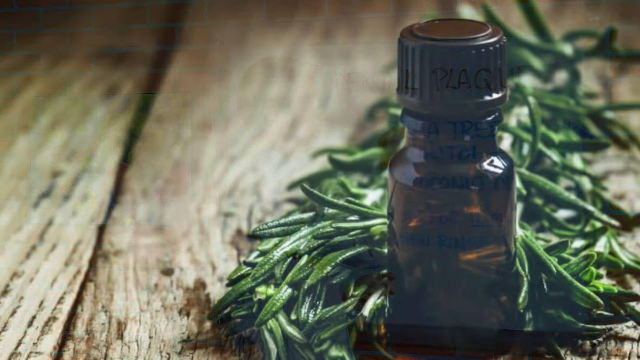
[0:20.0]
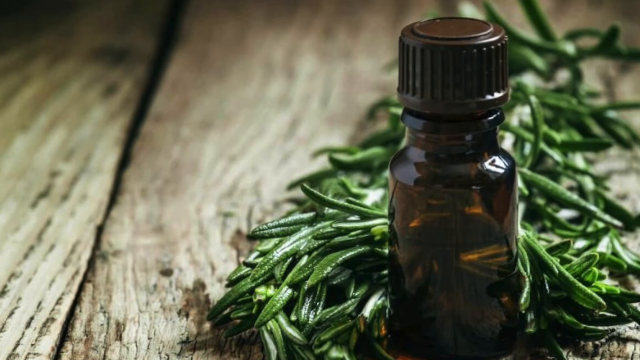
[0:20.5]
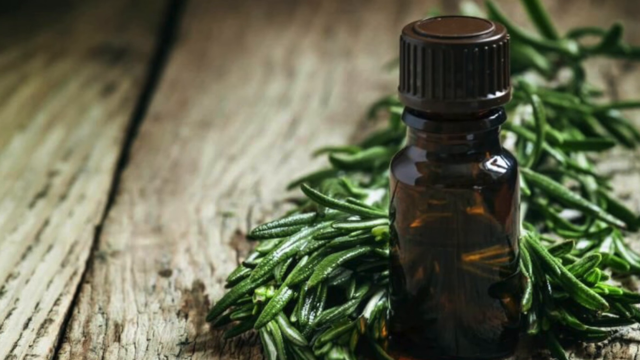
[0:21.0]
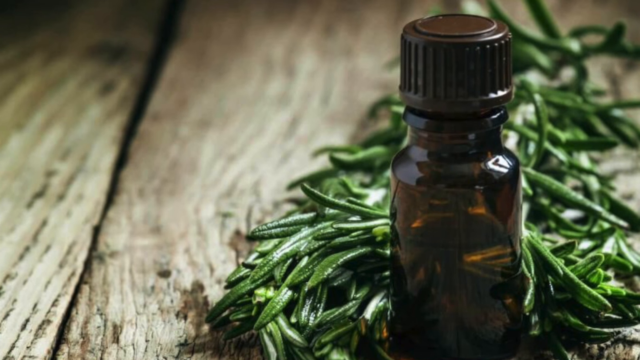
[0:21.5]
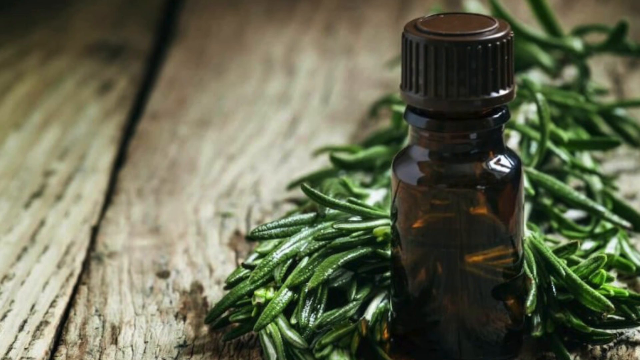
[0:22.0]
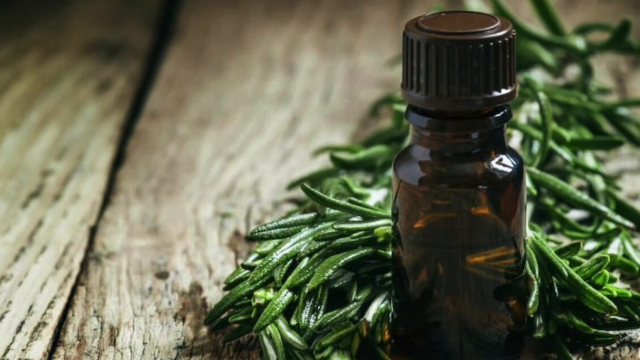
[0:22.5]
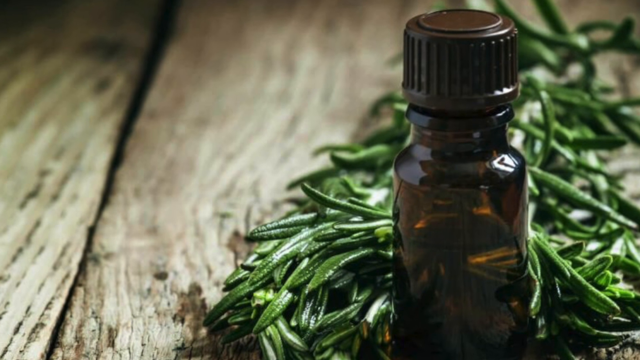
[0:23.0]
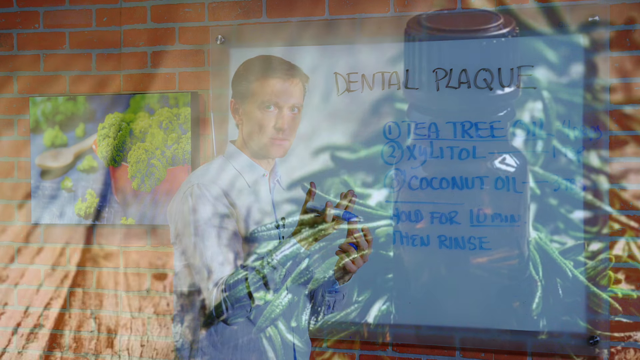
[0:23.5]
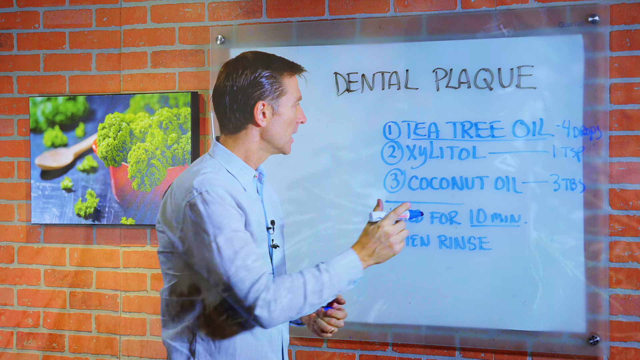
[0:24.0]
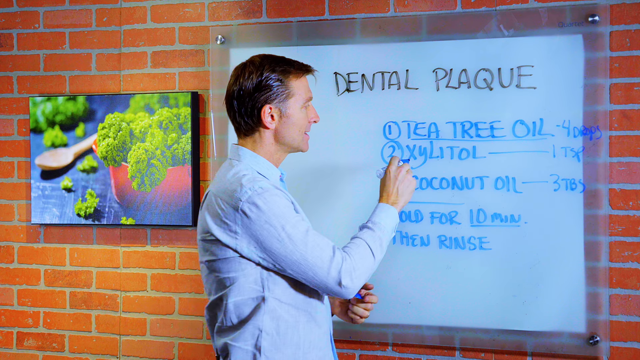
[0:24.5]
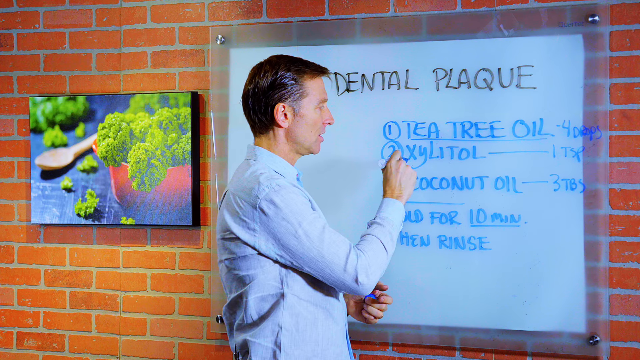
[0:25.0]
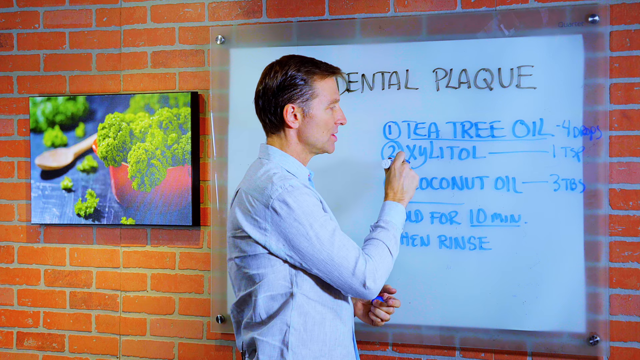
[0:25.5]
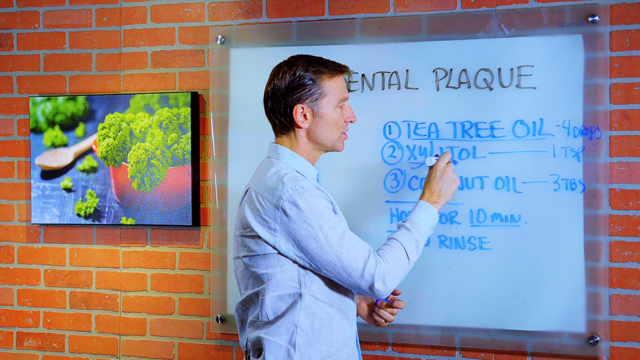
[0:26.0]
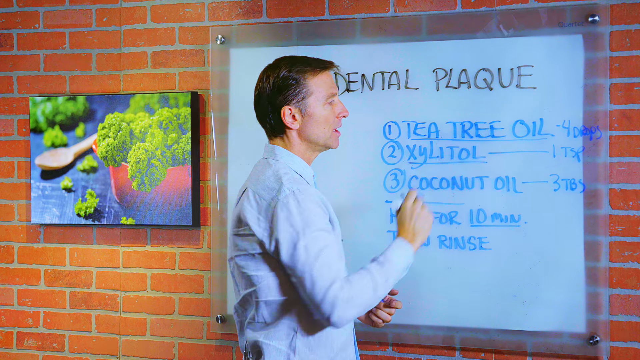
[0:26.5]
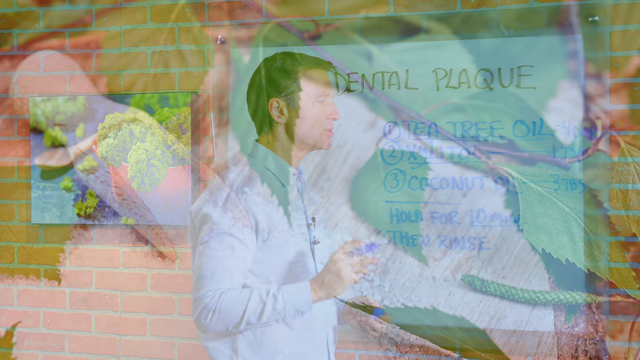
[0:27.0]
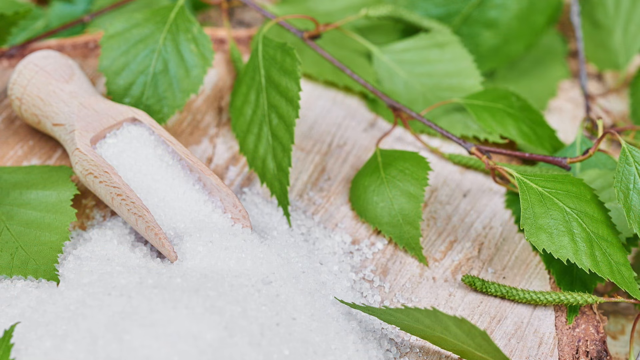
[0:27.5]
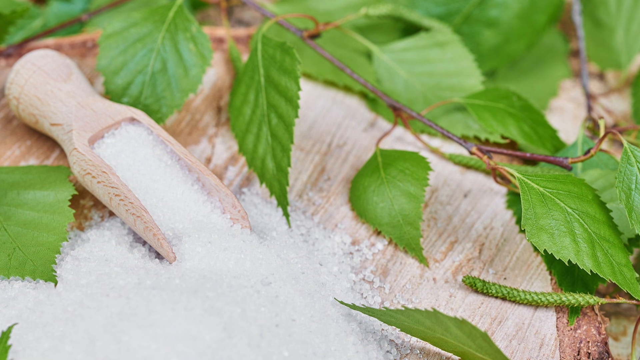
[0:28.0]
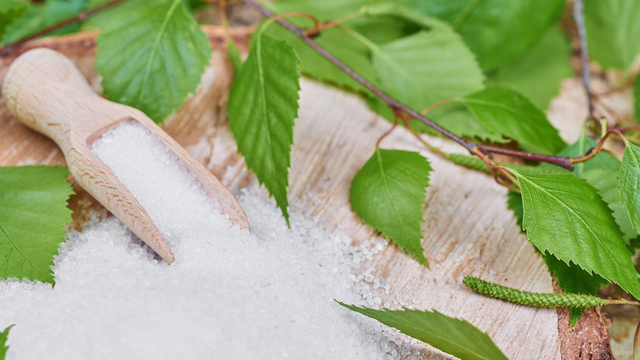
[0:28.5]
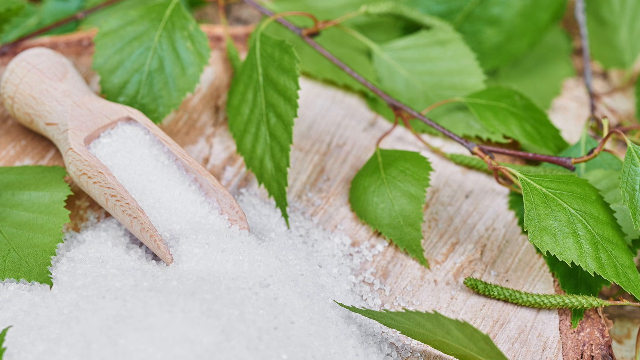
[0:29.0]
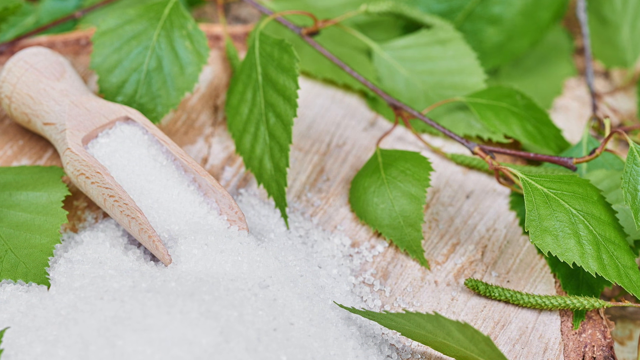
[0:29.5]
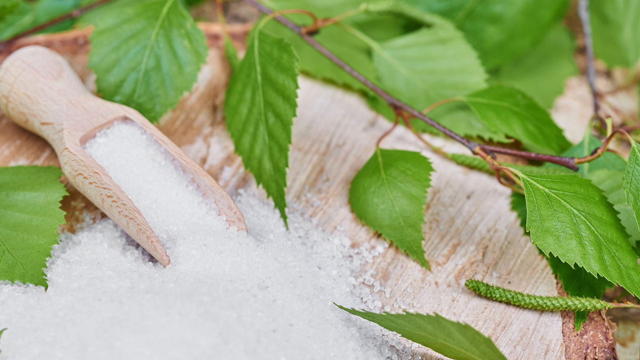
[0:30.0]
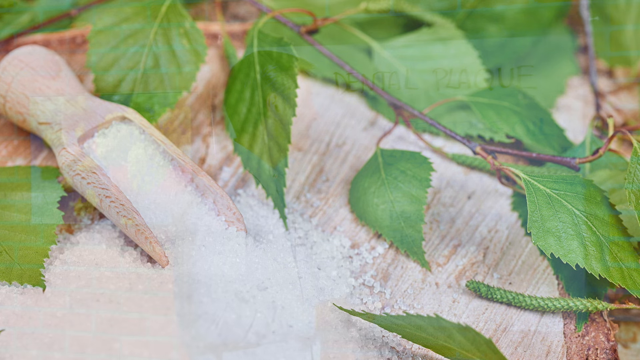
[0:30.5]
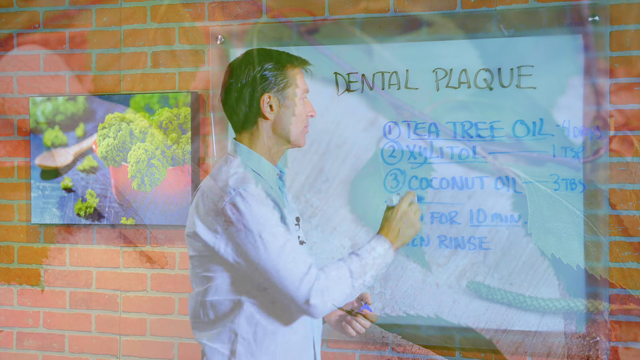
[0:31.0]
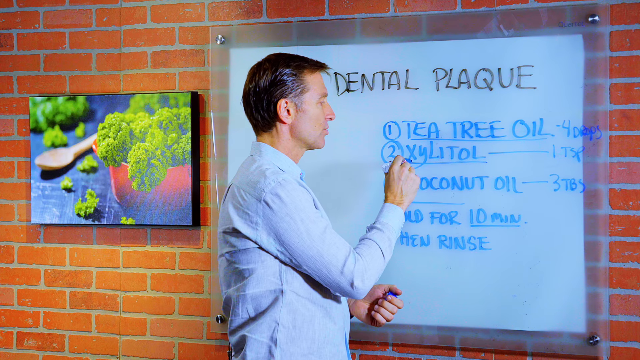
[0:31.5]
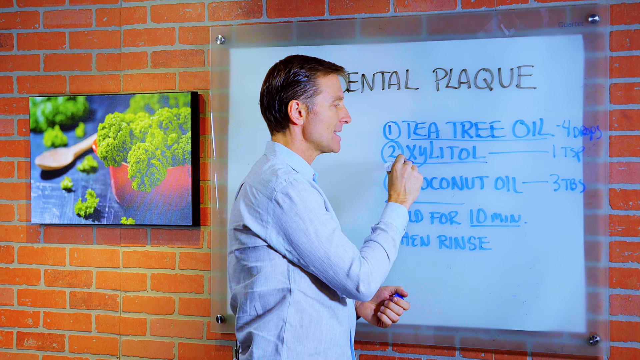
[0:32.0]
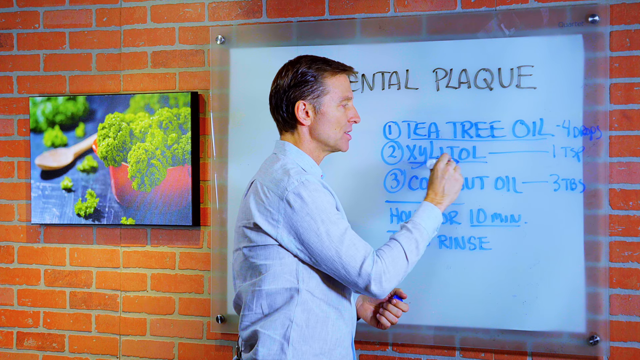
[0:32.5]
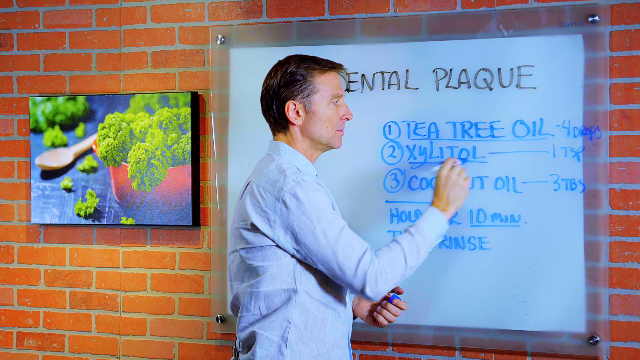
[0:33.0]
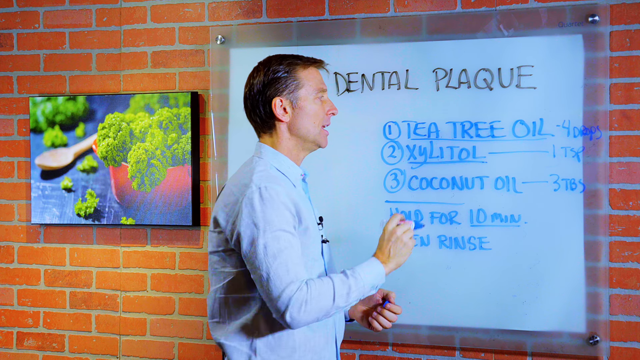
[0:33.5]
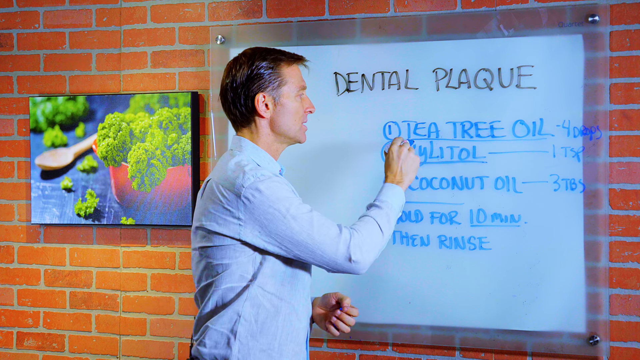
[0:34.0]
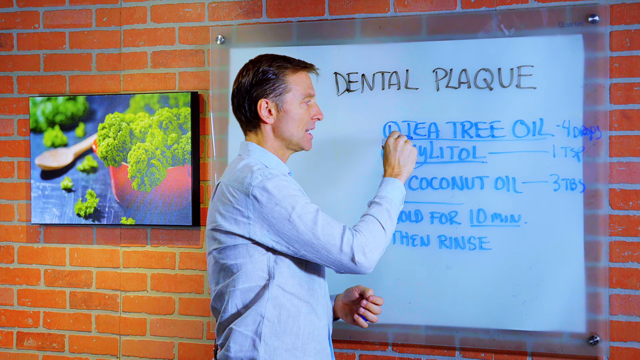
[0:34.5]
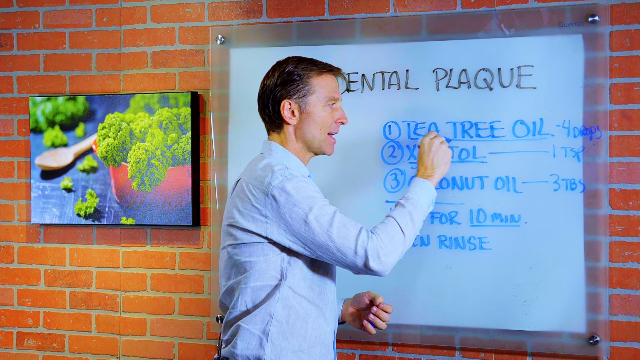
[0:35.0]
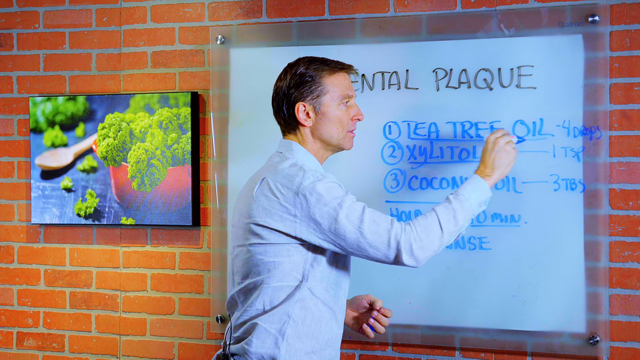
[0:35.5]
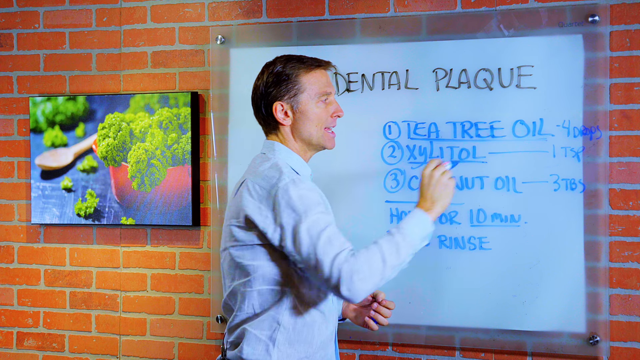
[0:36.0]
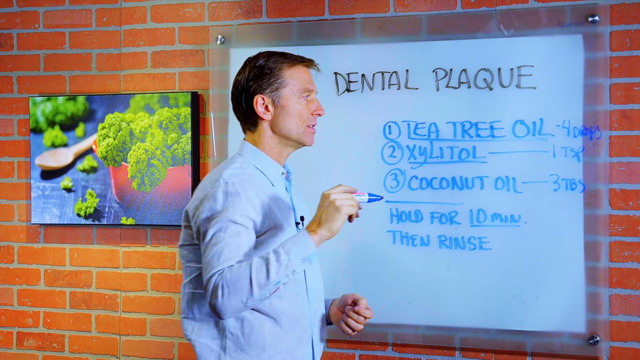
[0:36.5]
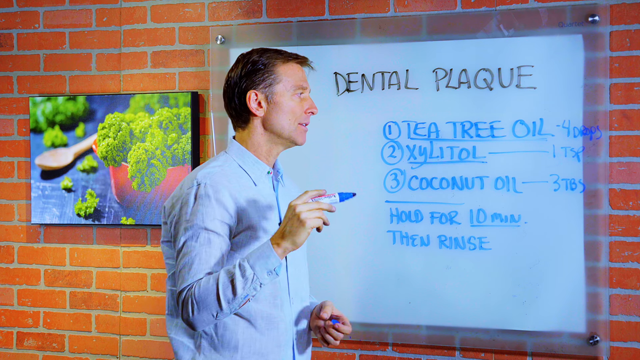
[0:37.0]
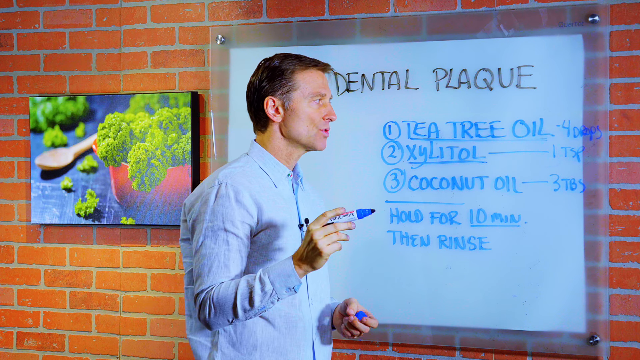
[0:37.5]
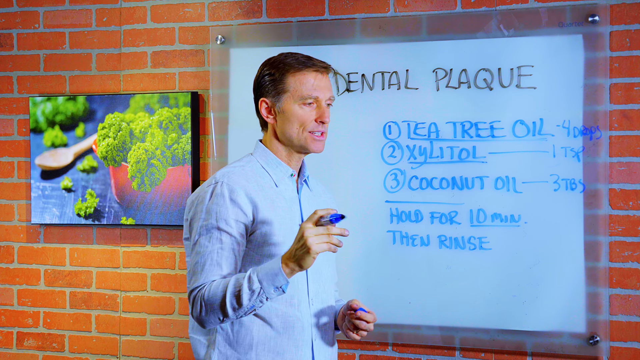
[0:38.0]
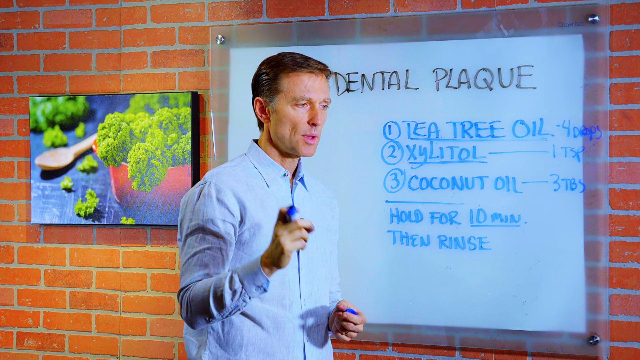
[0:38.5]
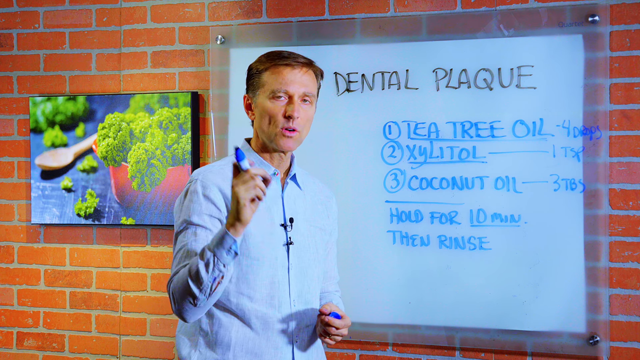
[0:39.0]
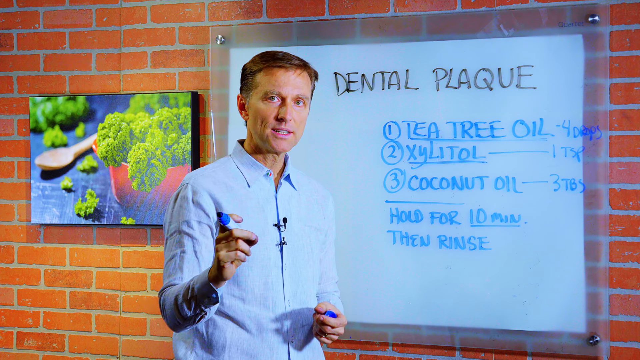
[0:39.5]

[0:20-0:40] An image shows green needles that look like rosemary but could be tea tree, with a brown bottle in front of them, resting on a wooden board, probably the table, with the grain of the wood visible. The image fades back to the man, now holding a pen and looking at the wall board with the outline for preventing dental plaque; he underlines the number two ingredient, xylitol. The video changes to an image of a wooden spoon holding white crystals, probably xylitol, and a branch with serrated leaves, probably from a birch tree. It switches back to the man holding the marking pen and pointing to xylitol on the board. He then moves to the number one ingredient, tea tree oil, underlines it, and keeps speaking, shaking his right hand with the pen for emphasis.